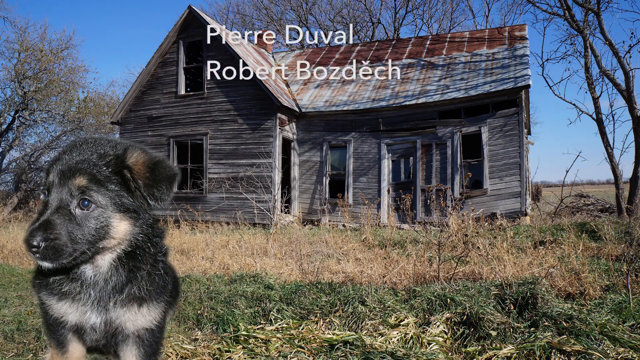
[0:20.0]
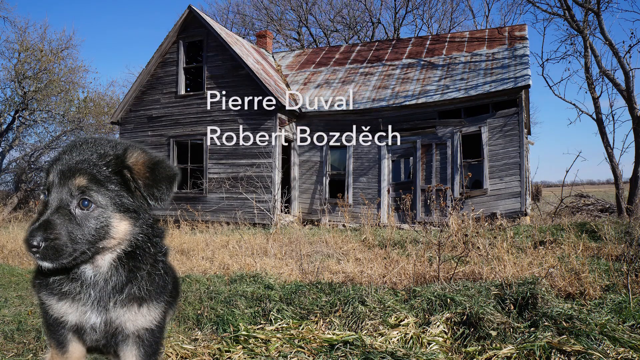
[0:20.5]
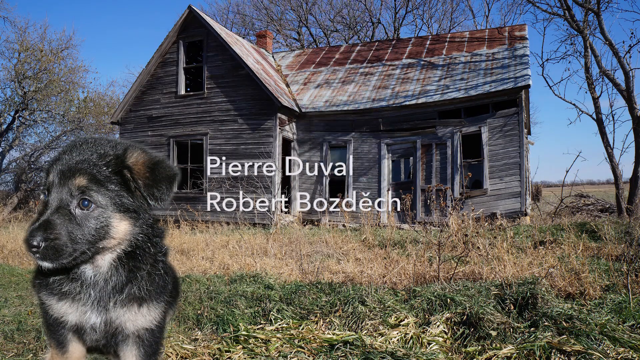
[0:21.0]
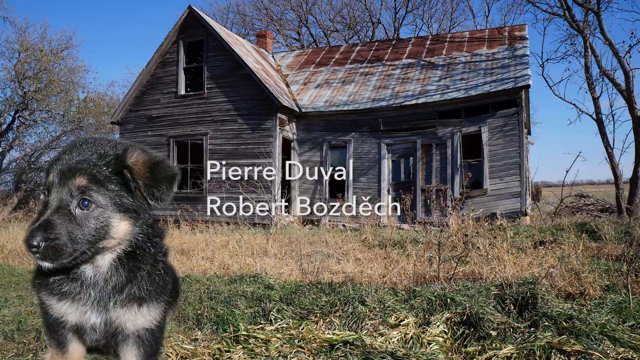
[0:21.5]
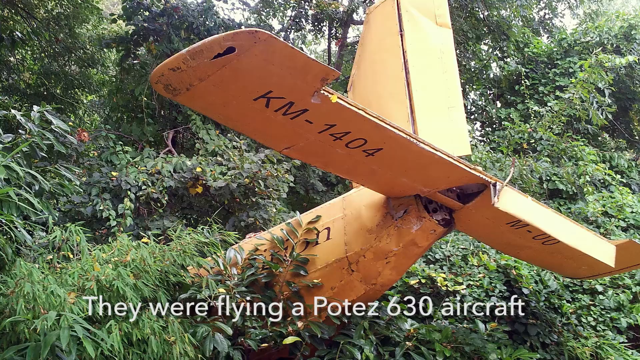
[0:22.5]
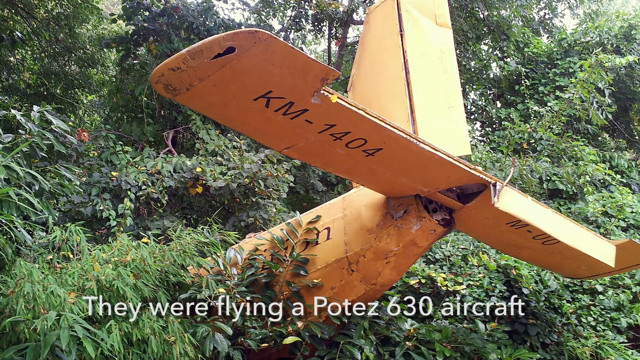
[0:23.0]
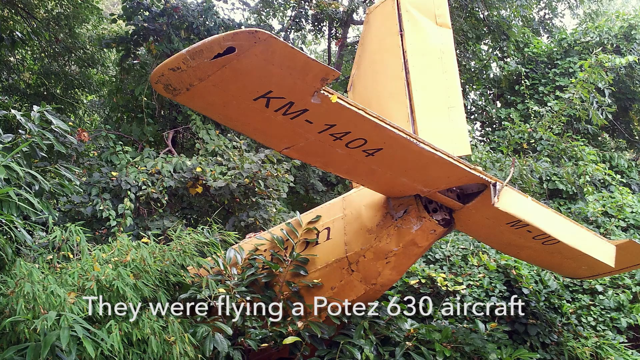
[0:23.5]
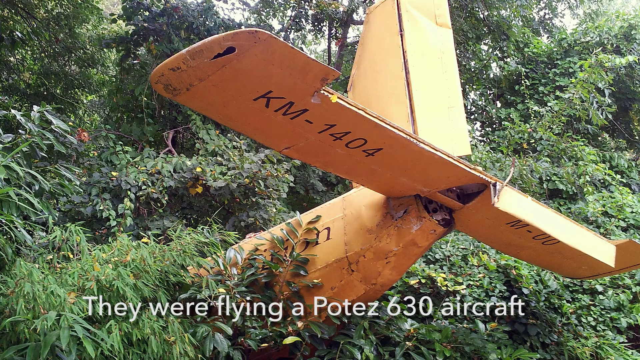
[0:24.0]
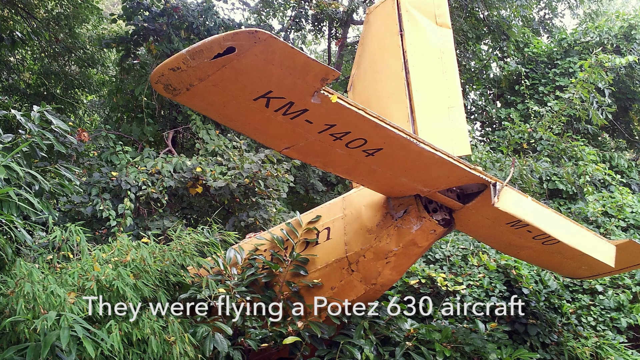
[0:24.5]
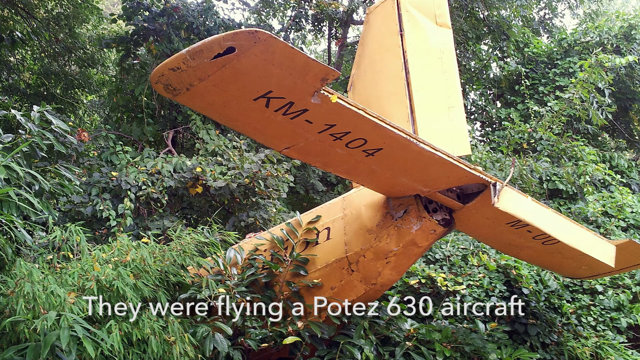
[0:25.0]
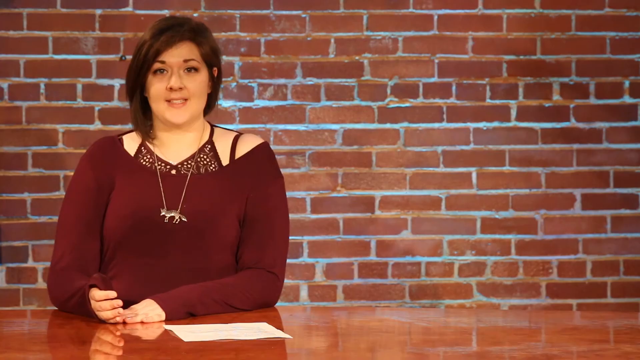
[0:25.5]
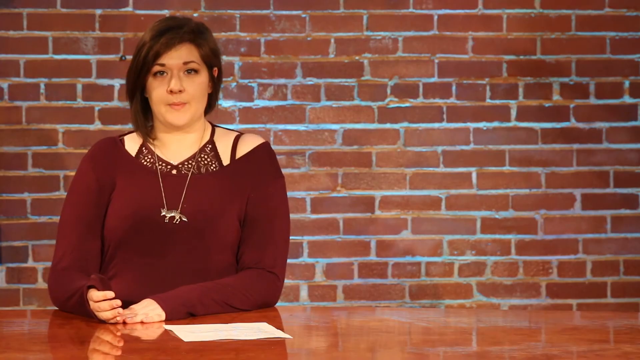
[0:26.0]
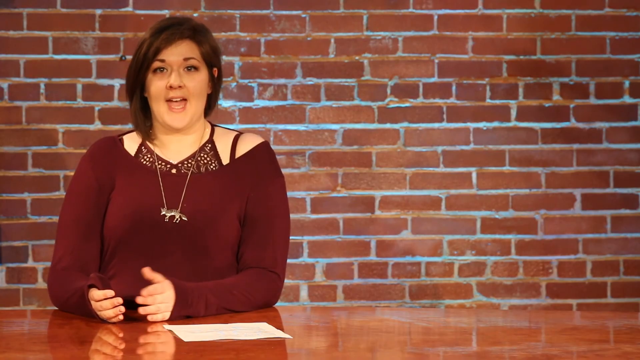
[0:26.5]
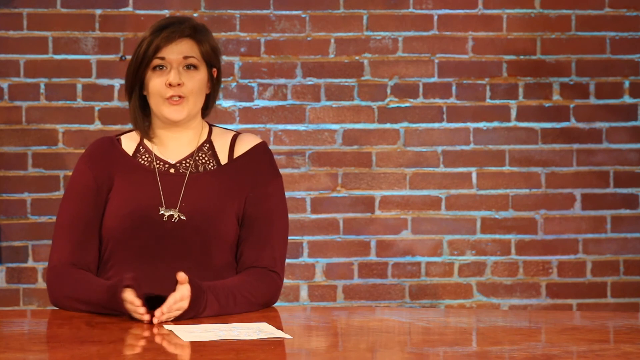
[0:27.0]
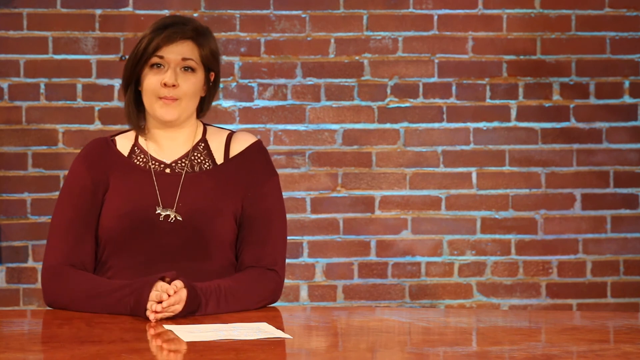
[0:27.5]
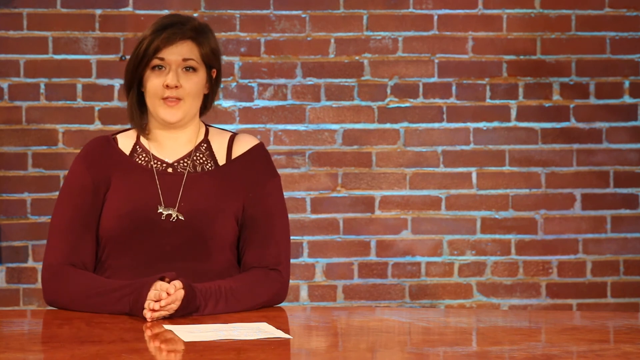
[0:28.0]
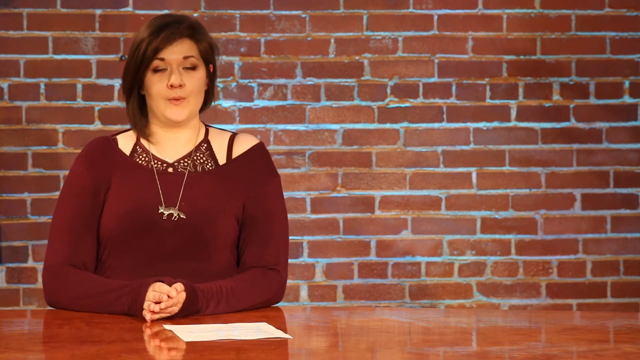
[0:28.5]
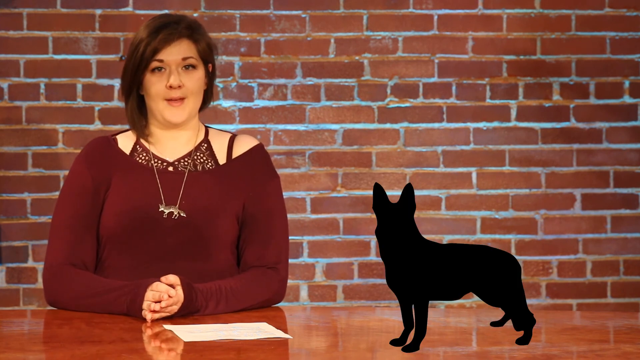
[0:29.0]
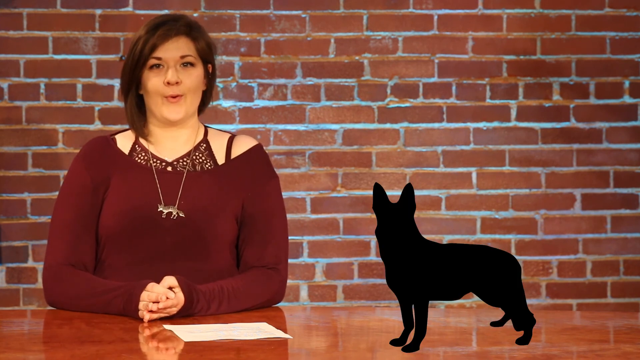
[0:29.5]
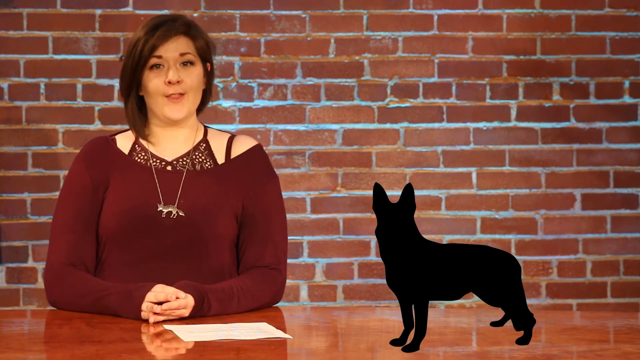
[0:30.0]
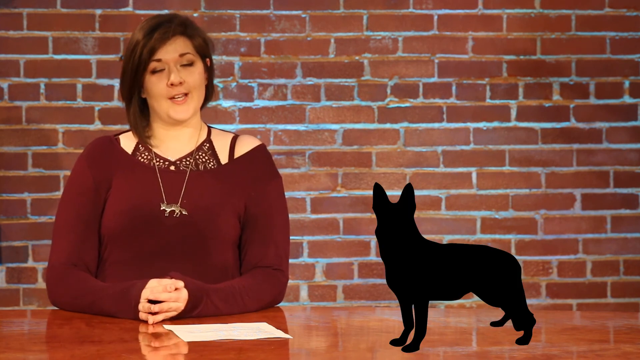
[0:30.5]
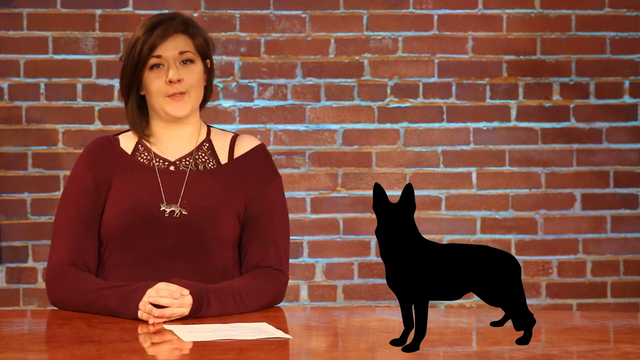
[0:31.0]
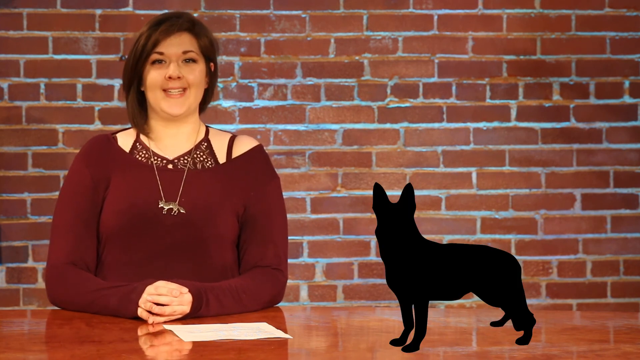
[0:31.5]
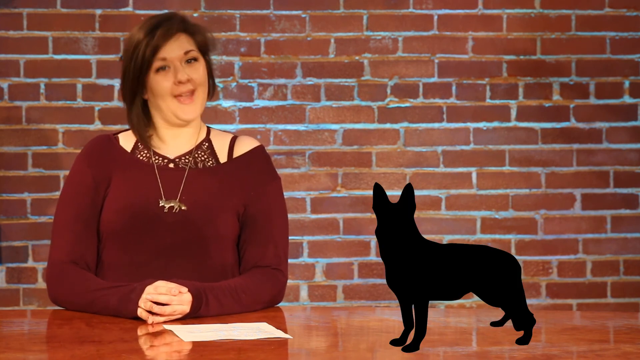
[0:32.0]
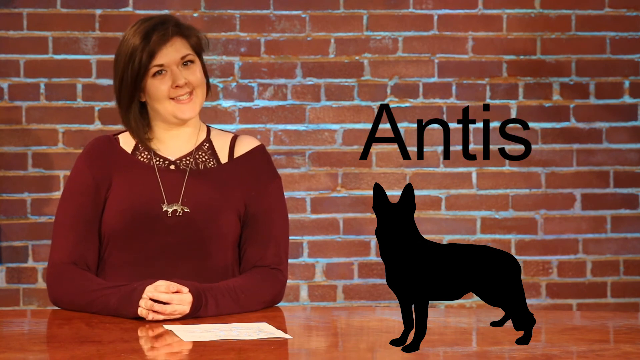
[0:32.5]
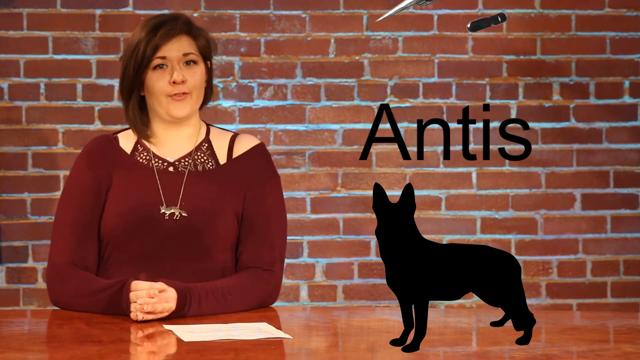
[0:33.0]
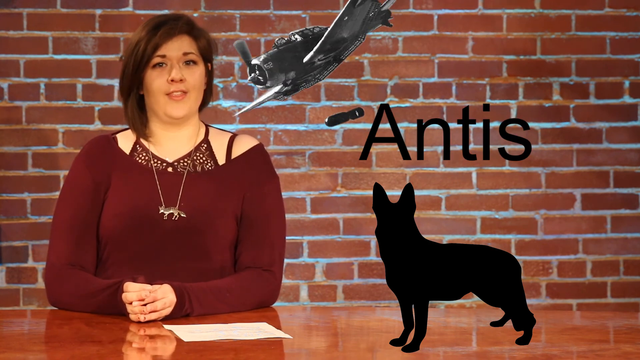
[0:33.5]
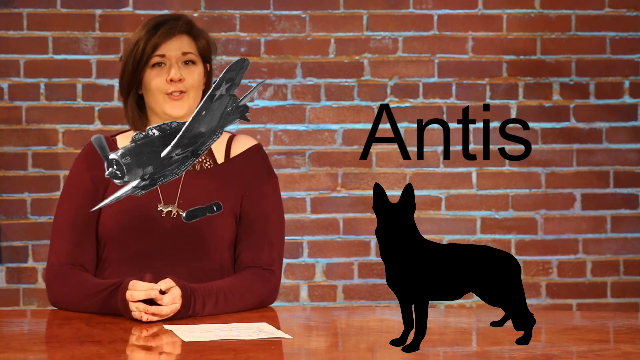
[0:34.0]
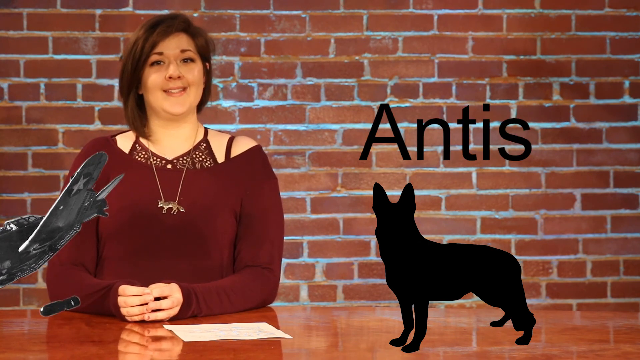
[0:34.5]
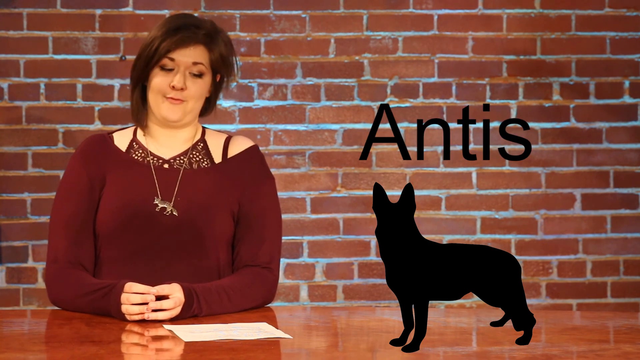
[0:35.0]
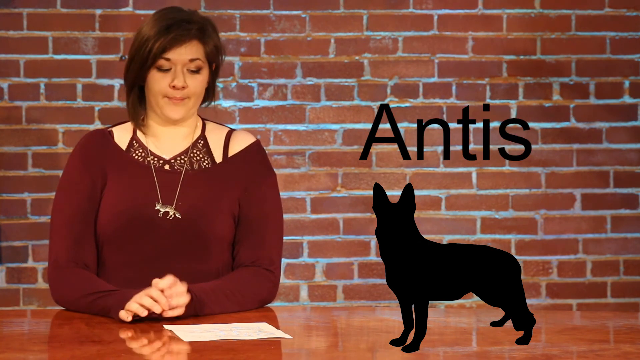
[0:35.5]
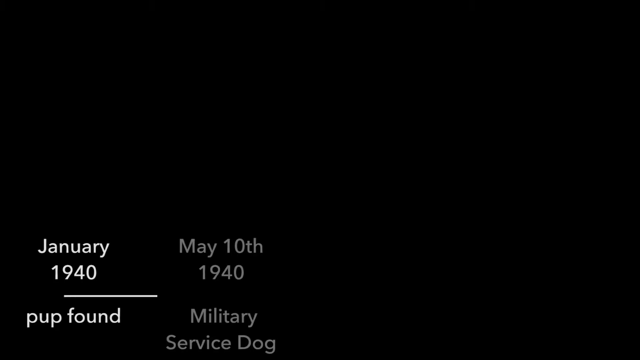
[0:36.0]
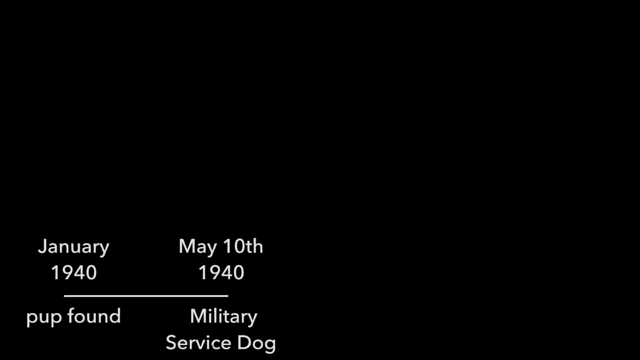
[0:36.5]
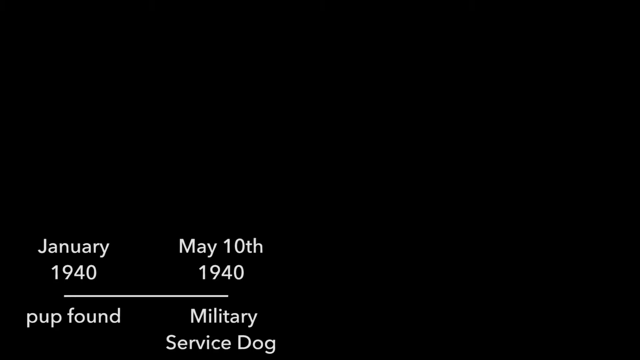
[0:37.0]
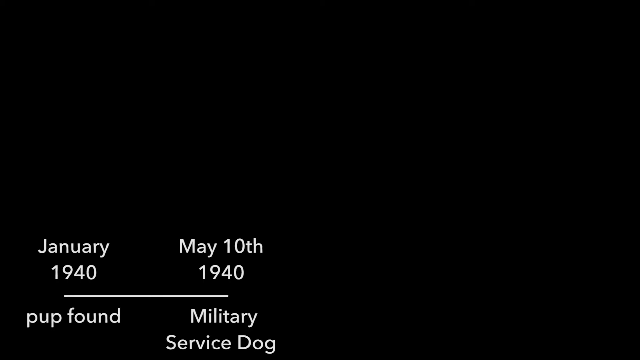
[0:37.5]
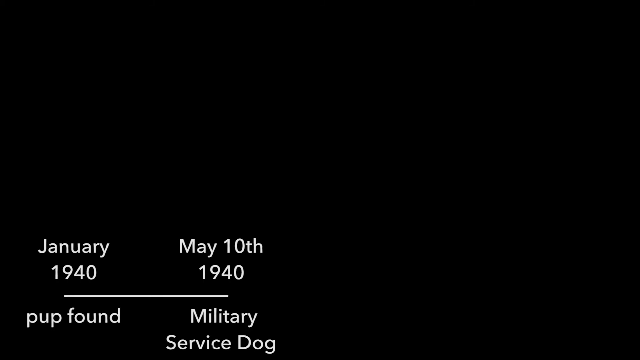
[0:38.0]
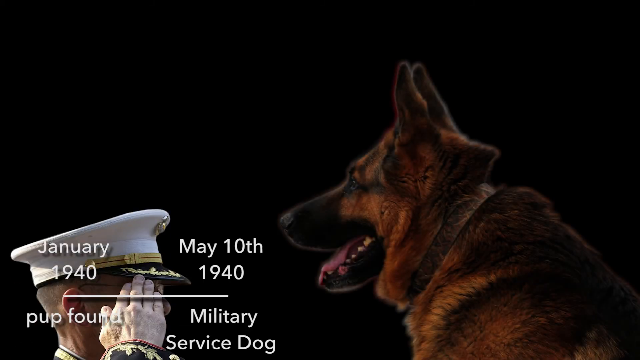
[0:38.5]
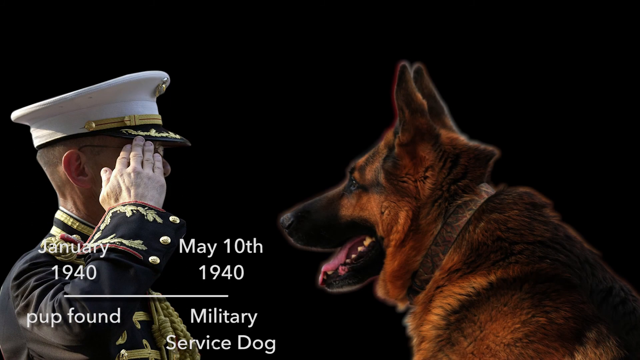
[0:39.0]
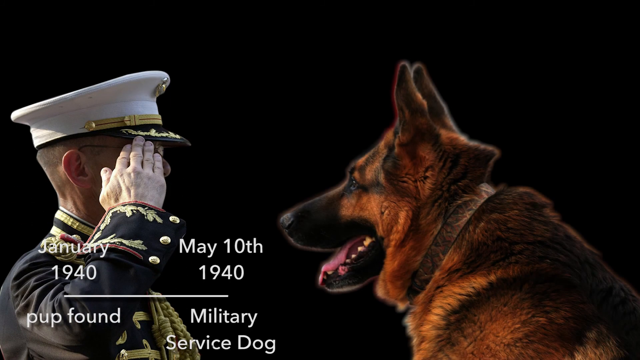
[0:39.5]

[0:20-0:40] An old, run-down wooden house looks like it is starting to cave in; its roof is slanted, some of the windows are broken, and some doorways have no doors, just openings. Behind the house is a clear sky without a single cloud. A German Shepherd pup looks off to the left in the lower left-hand corner. Two names come up: Pierre Duval and Robert Bose Deck. Next, a yellow airplane is stuck in some trees with its tail sticking out, and text says "they were flying a Potez 630 aircraft." A German Shepherd silhouette appears with the text "Antus," and an airplane flies through the picture. The text "January 1940" appears, then "May 10th 1940," and someone who looks like a military person gives something like a salute.